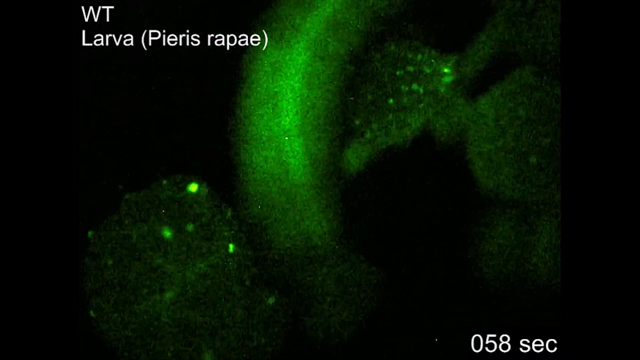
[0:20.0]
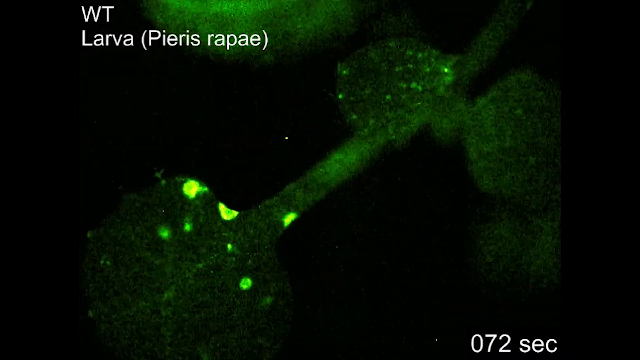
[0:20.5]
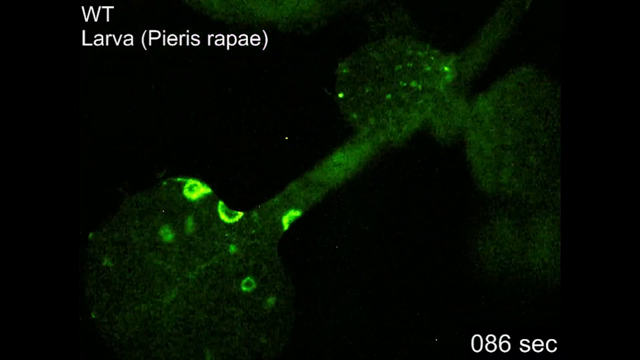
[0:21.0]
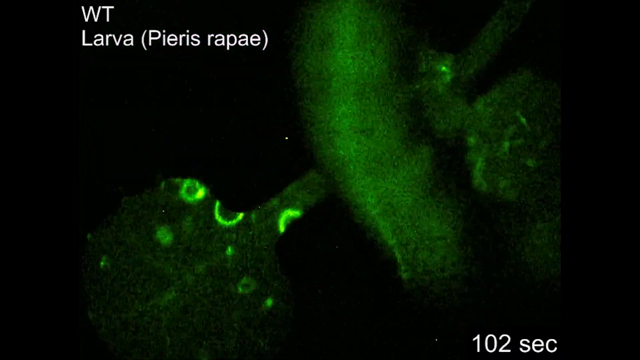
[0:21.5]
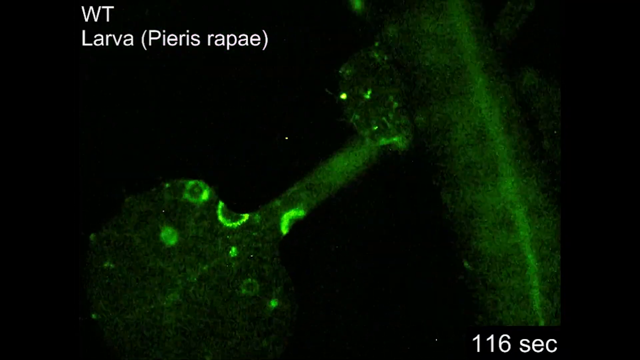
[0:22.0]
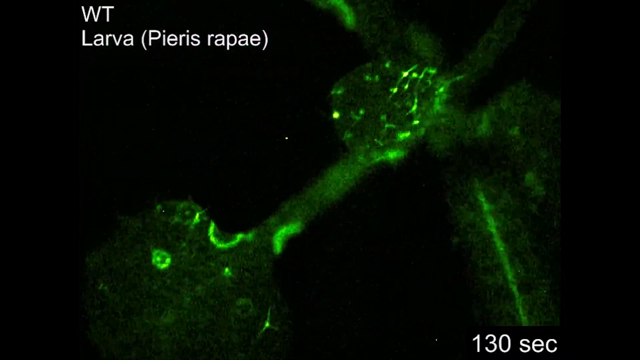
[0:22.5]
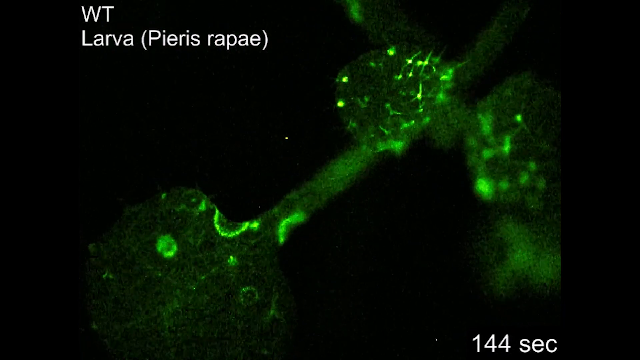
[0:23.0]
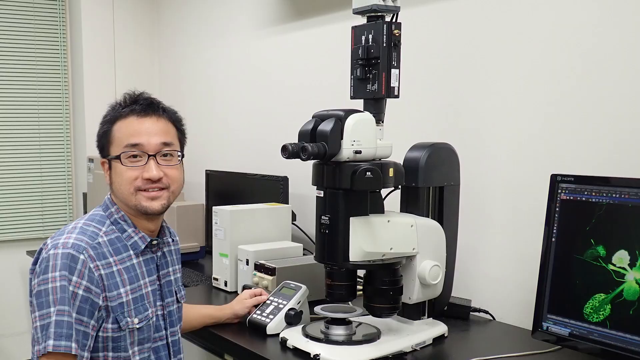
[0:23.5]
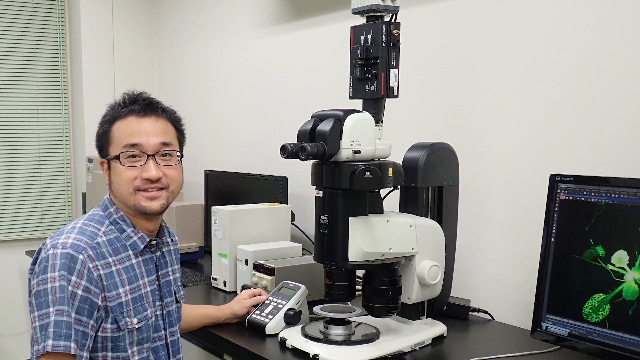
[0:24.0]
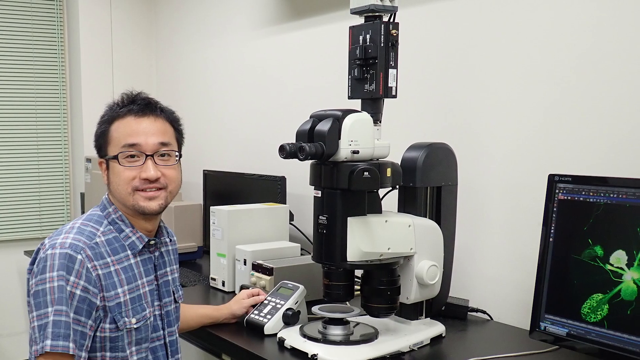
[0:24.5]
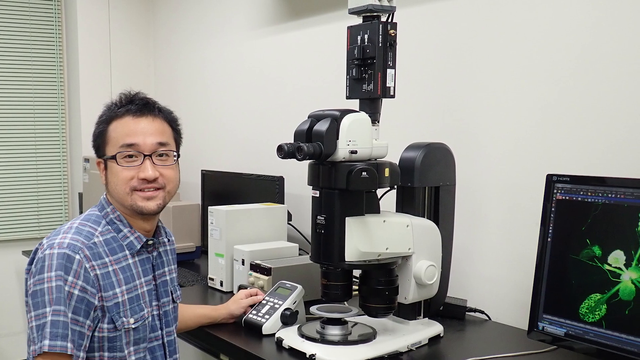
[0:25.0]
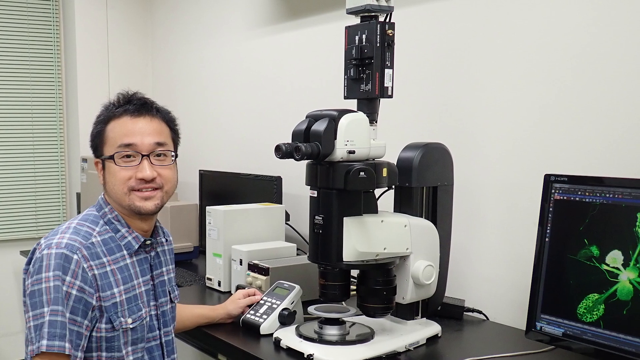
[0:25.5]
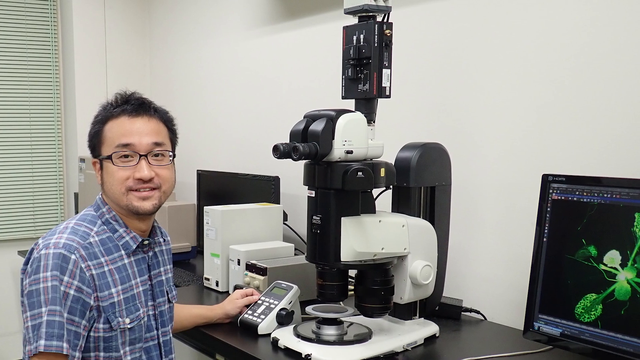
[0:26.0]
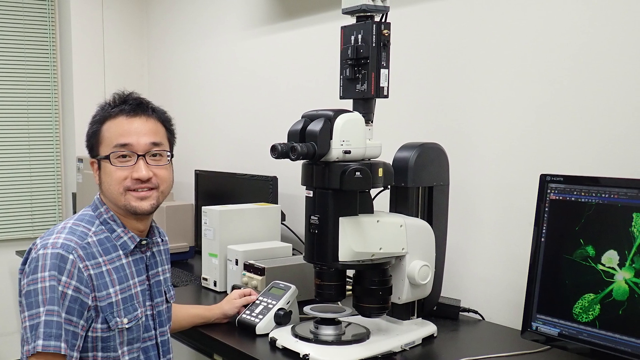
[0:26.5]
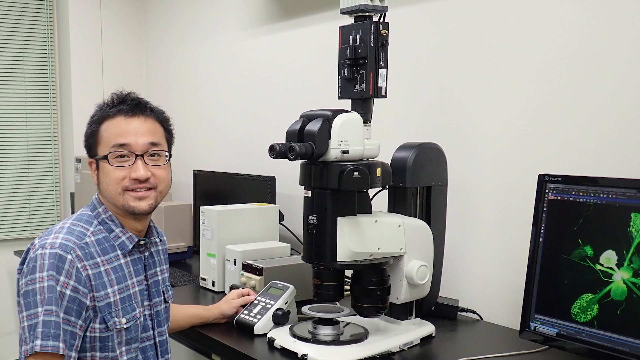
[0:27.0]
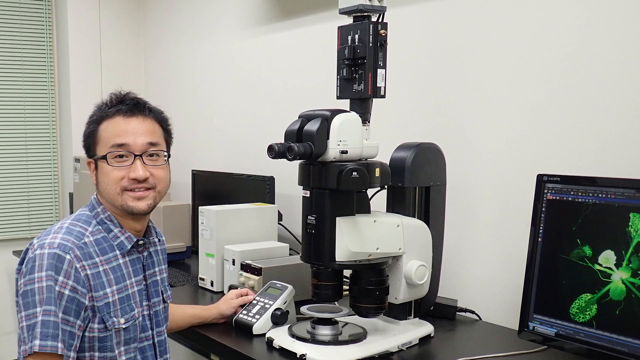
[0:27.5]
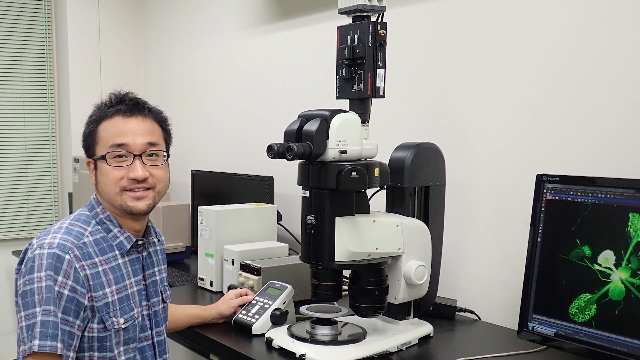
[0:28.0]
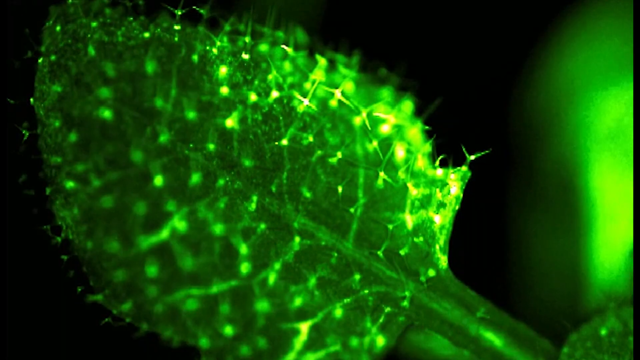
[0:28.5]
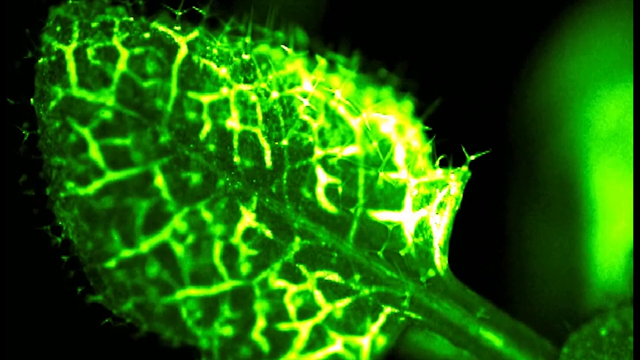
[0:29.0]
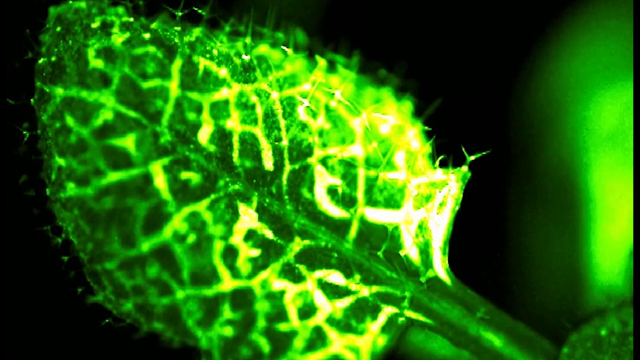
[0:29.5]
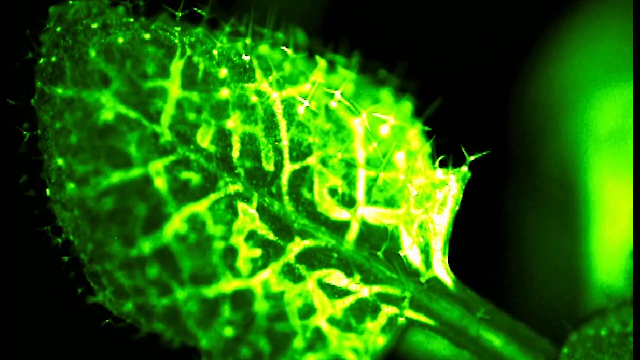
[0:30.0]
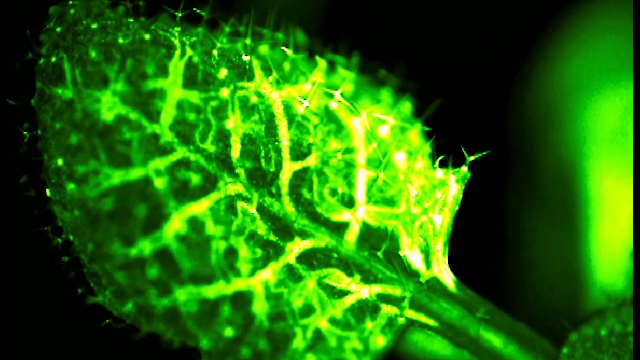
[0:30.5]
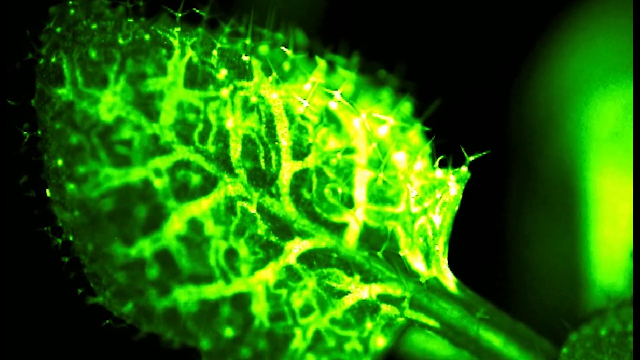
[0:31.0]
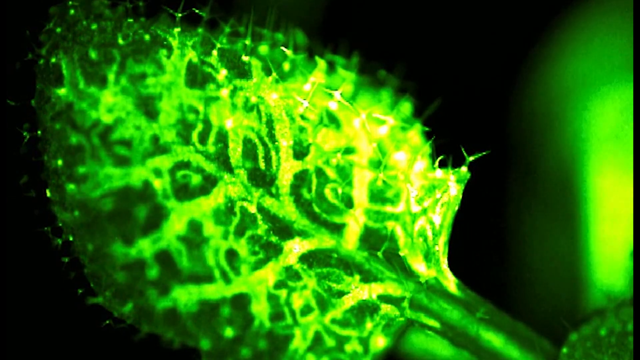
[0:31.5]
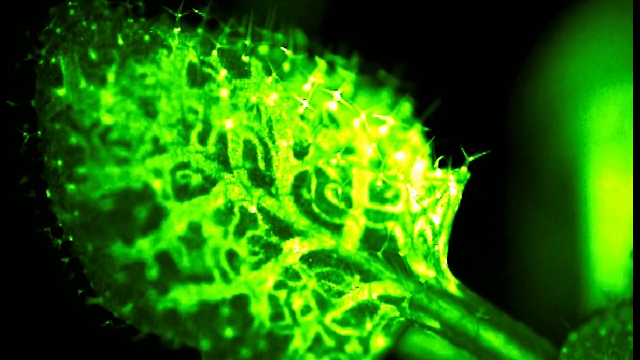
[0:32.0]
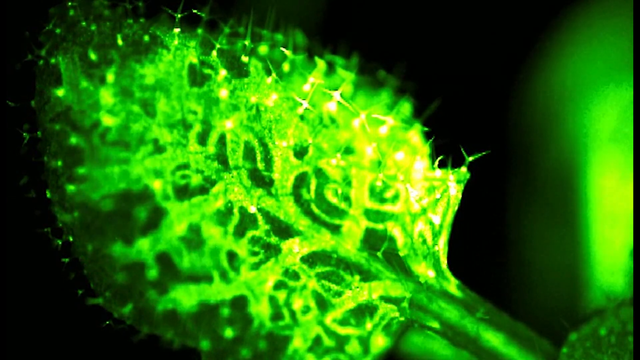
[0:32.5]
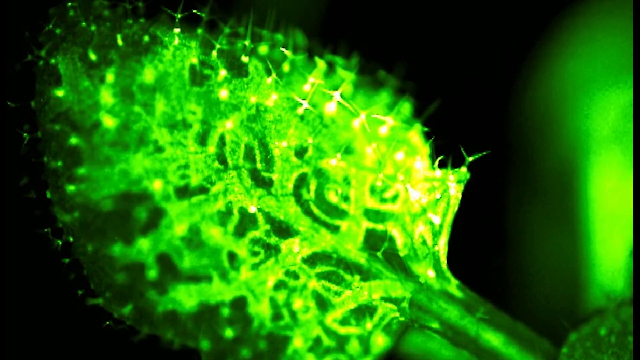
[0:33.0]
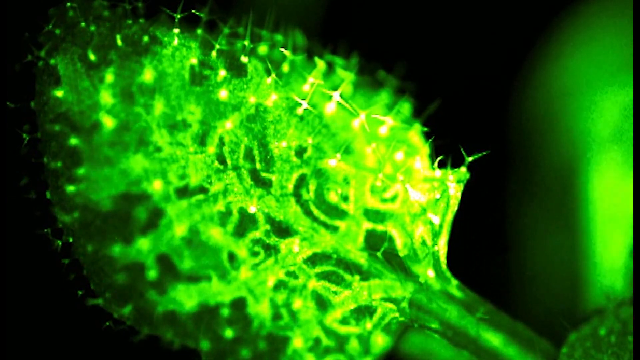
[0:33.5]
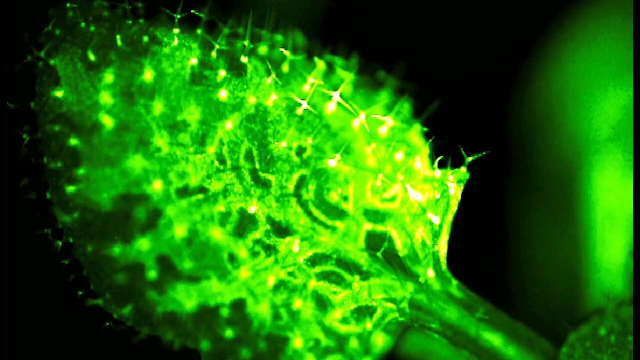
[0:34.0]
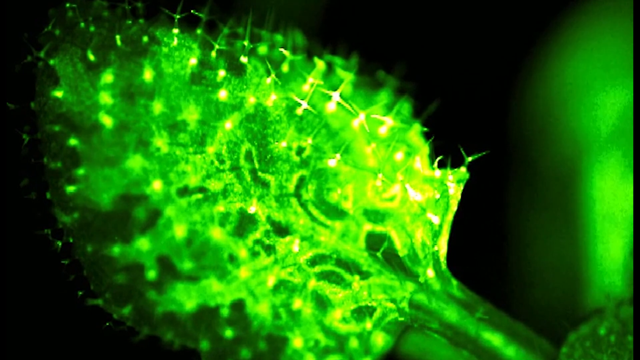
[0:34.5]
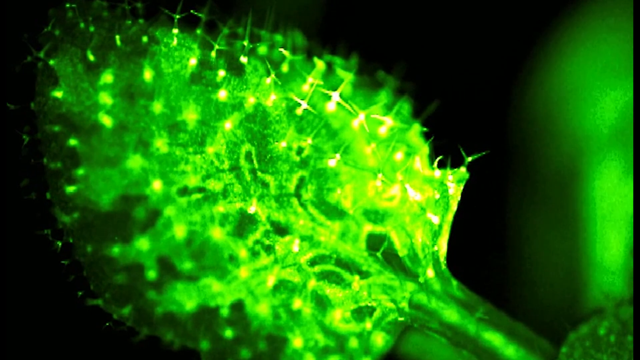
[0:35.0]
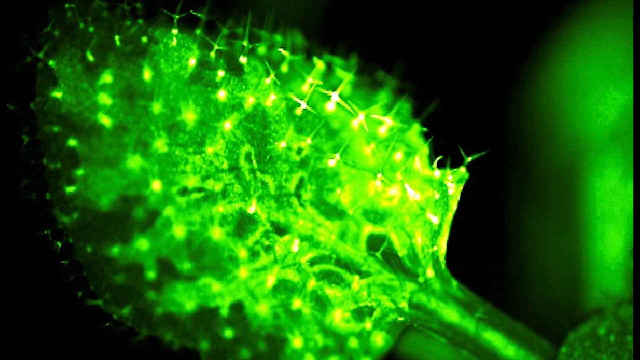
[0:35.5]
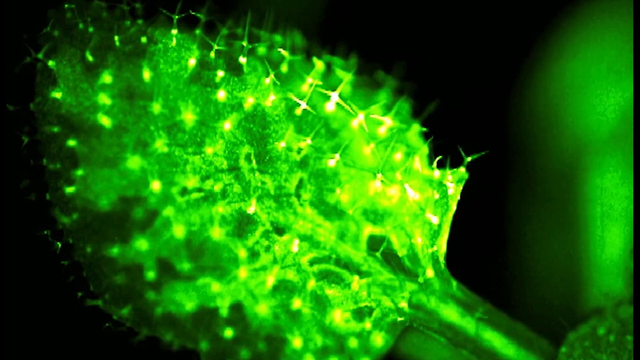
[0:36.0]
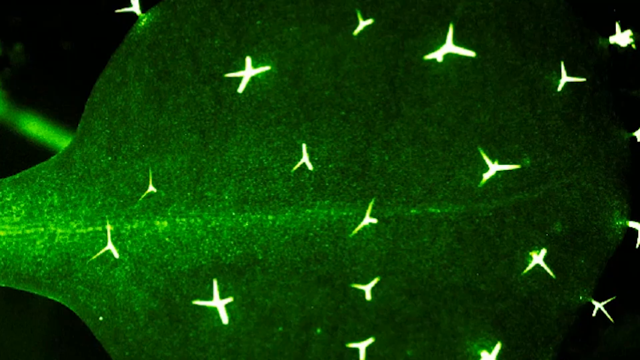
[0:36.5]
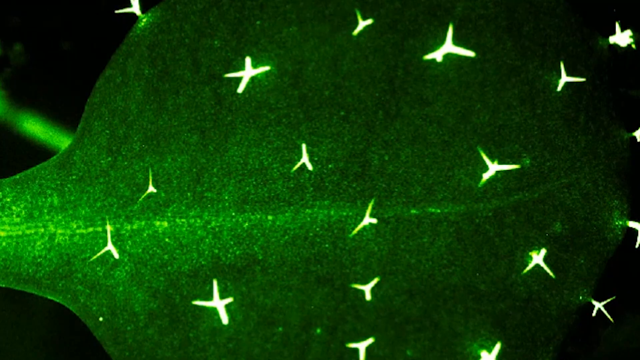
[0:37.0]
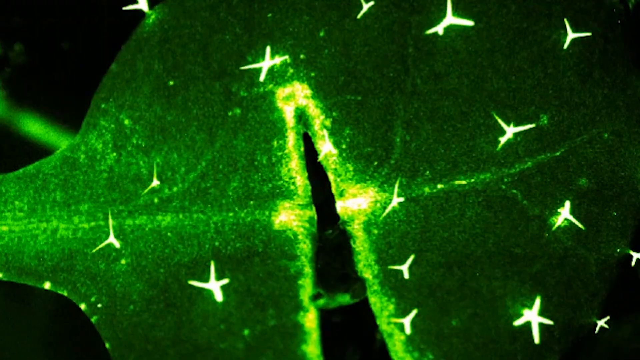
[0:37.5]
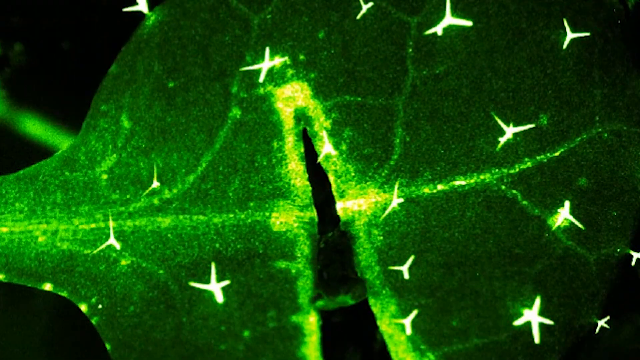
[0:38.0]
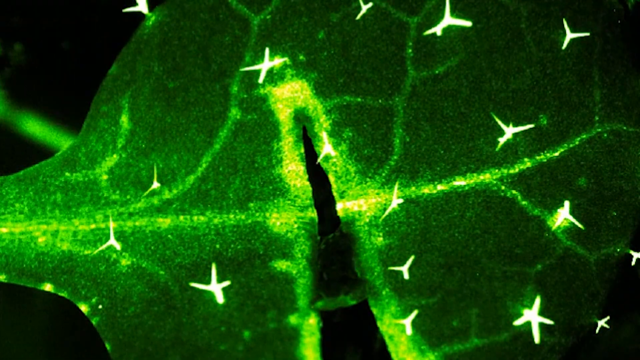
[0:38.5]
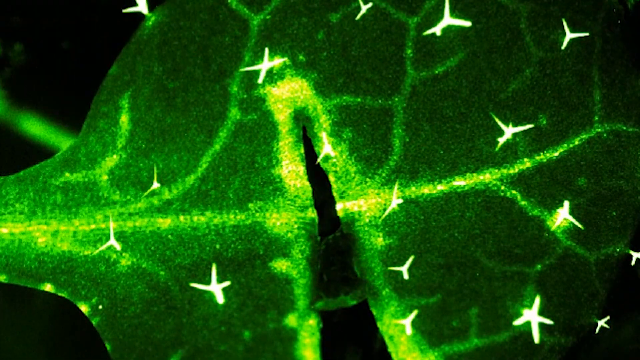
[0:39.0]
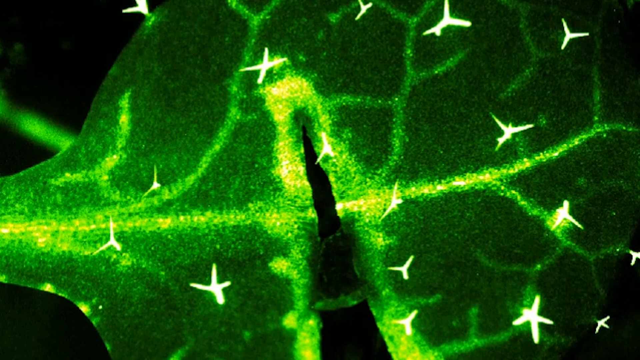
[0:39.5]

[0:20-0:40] Plant leaves are shown under microscopes, captured with some sort of night vision or fluorescent imaging technology; four leaves appear. Then a still photo shows what appears to be a scientist, seemingly an Asian man with a thin beard and glasses, wearing a striped short-sleeved button-down shirt and sitting at a desk with a microscope. It is unclear whether this is a stock image or the actual scientist looking at the plants. The setting appears to be some sort of botany lab and does not change.